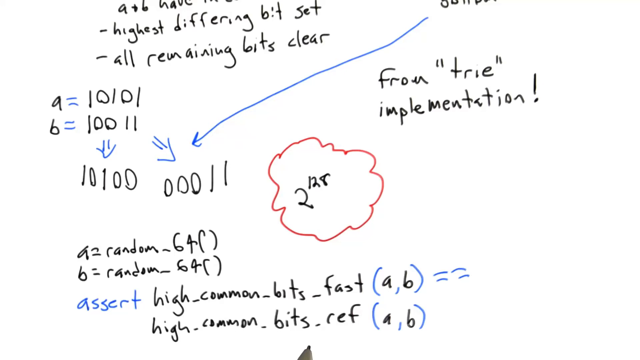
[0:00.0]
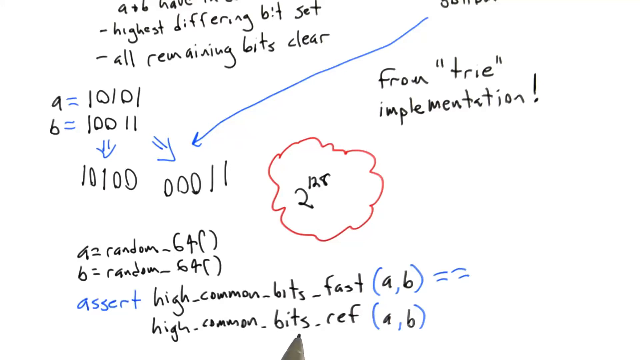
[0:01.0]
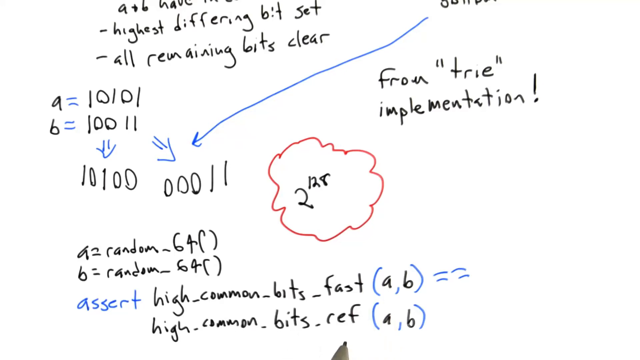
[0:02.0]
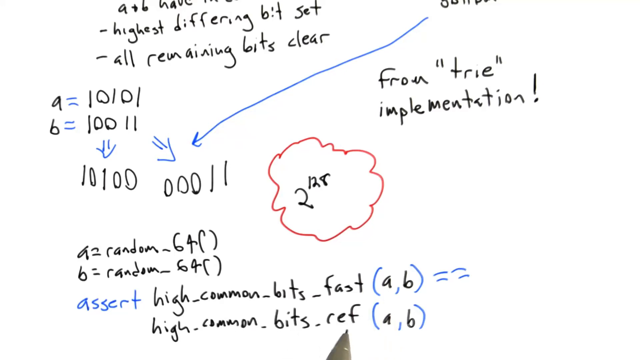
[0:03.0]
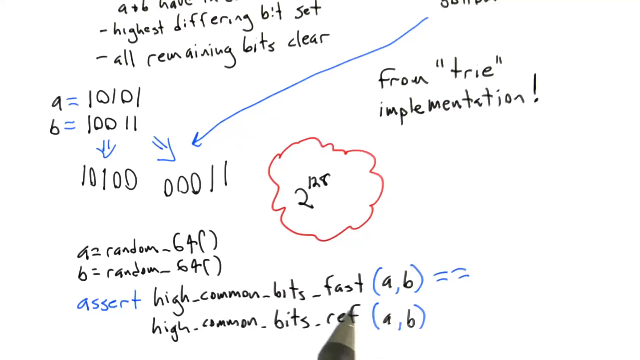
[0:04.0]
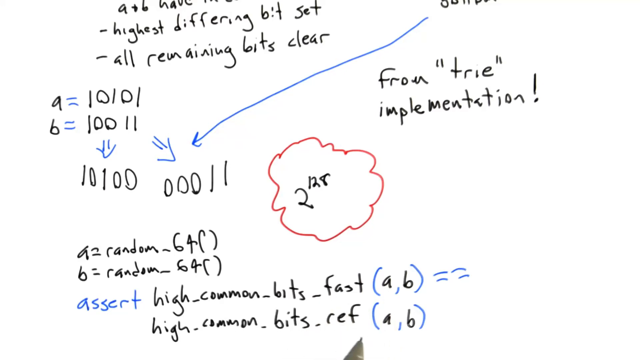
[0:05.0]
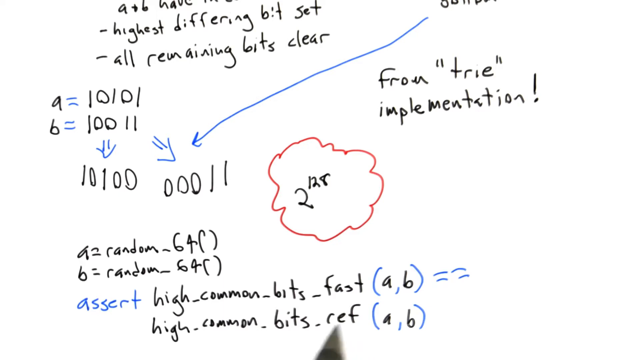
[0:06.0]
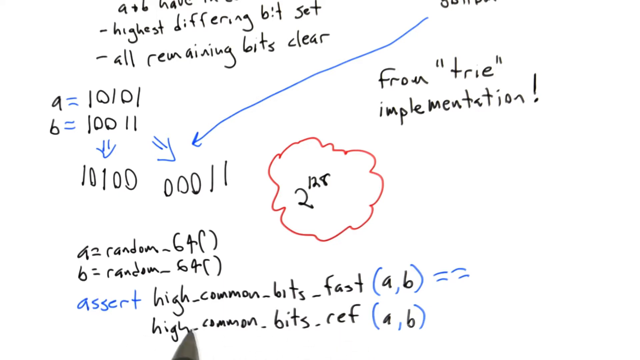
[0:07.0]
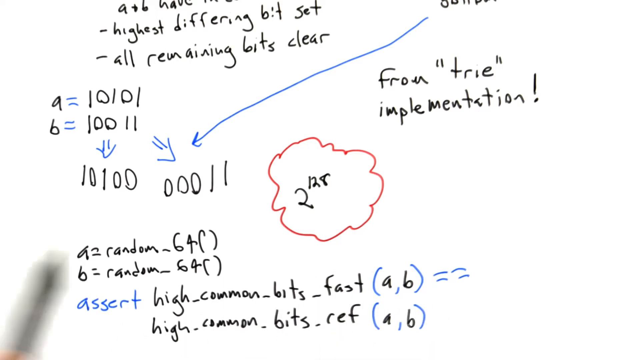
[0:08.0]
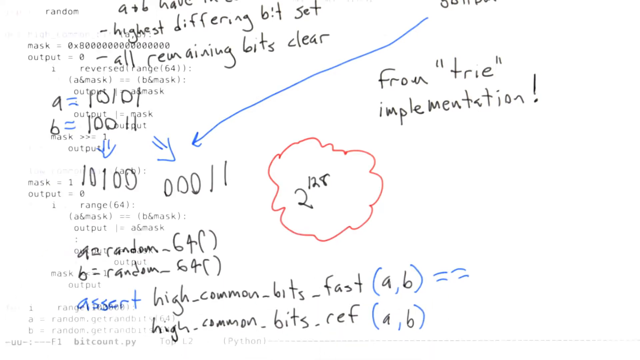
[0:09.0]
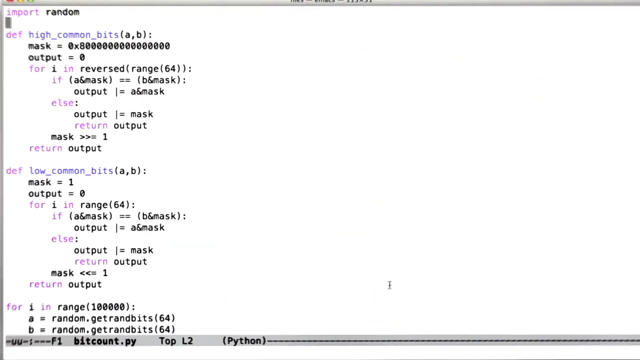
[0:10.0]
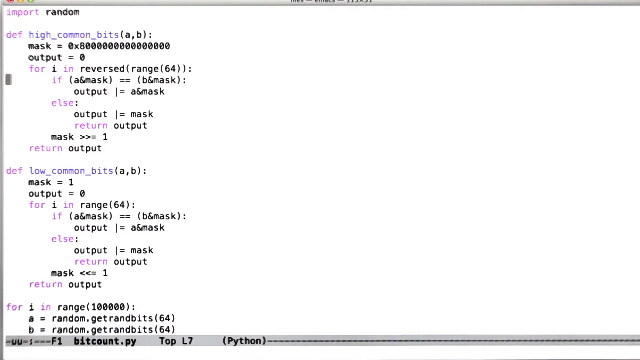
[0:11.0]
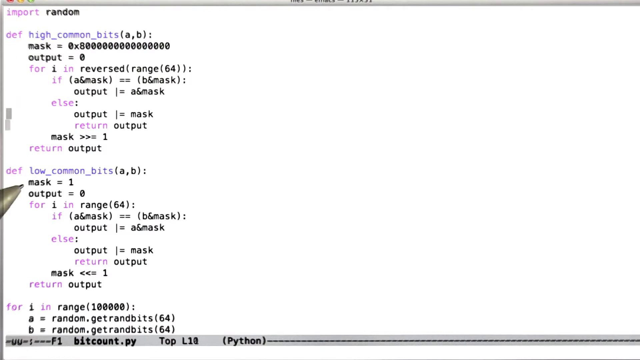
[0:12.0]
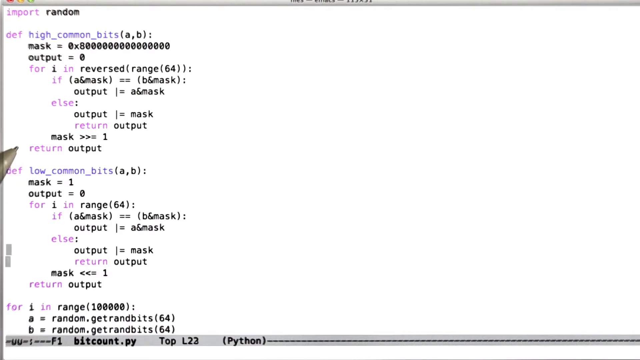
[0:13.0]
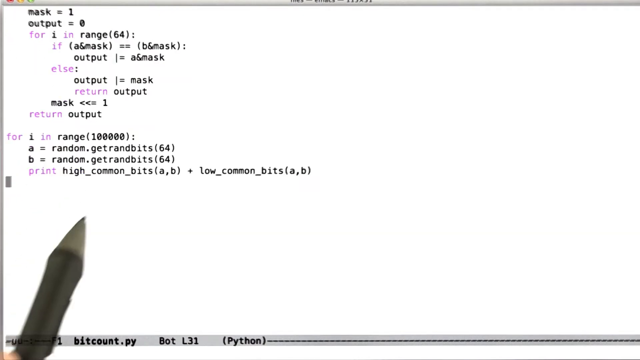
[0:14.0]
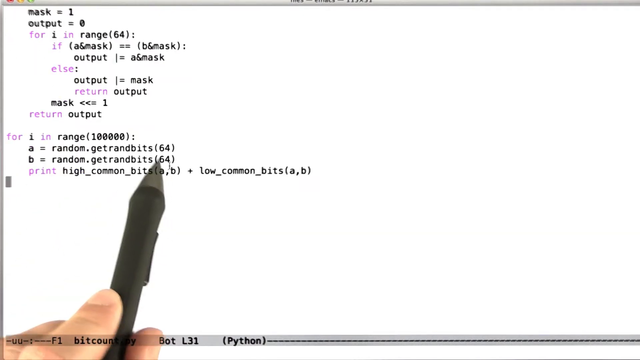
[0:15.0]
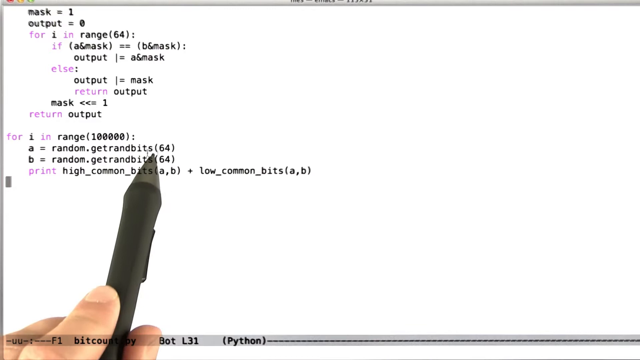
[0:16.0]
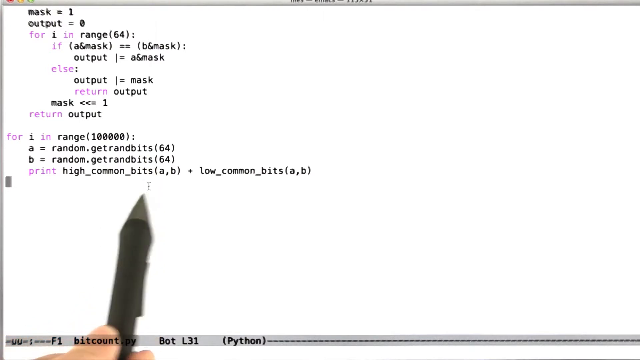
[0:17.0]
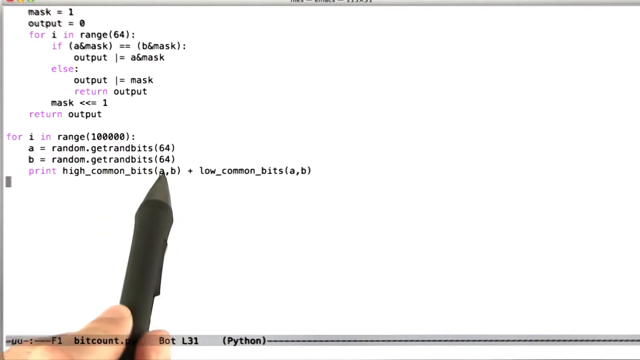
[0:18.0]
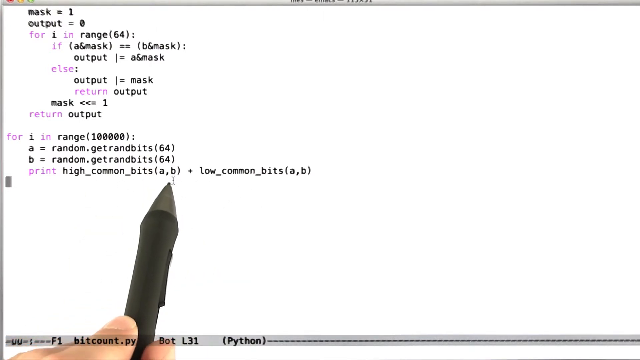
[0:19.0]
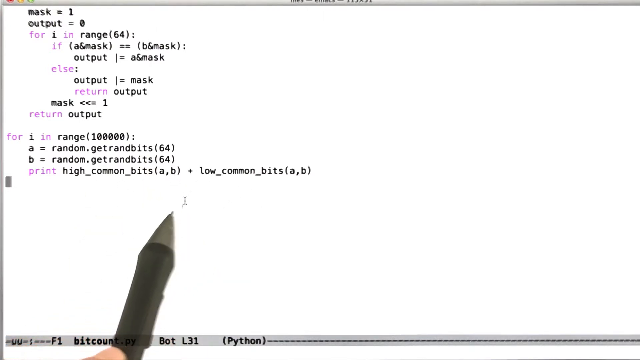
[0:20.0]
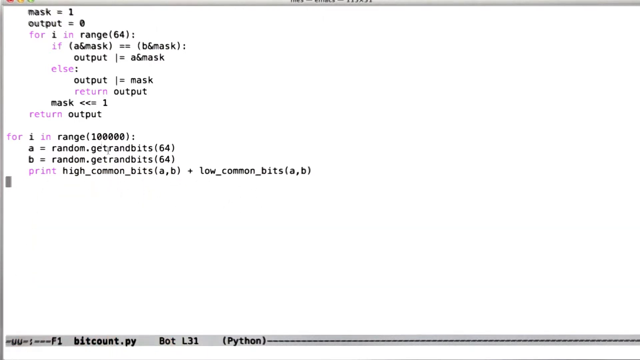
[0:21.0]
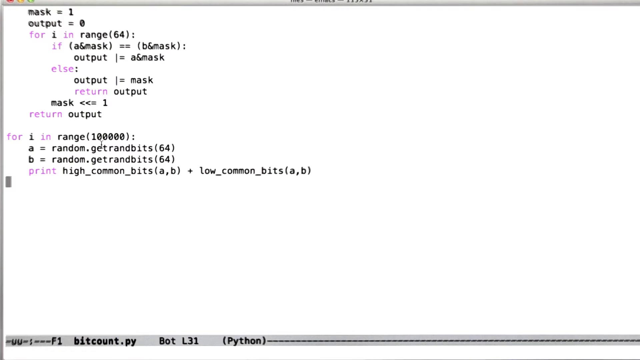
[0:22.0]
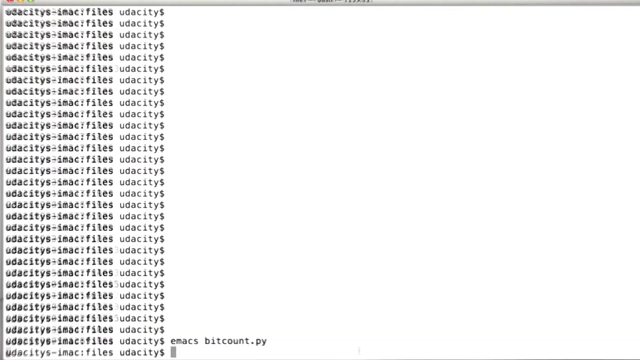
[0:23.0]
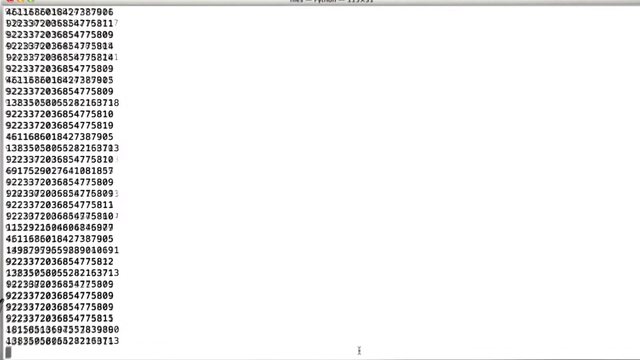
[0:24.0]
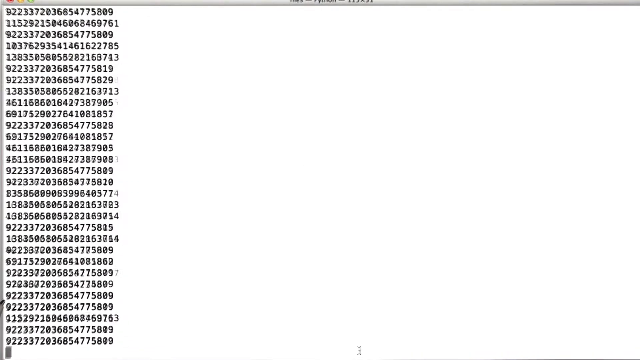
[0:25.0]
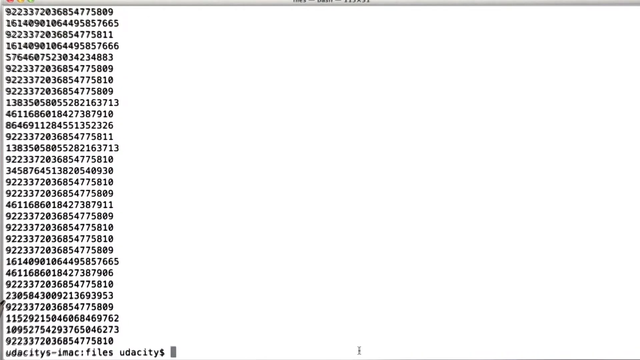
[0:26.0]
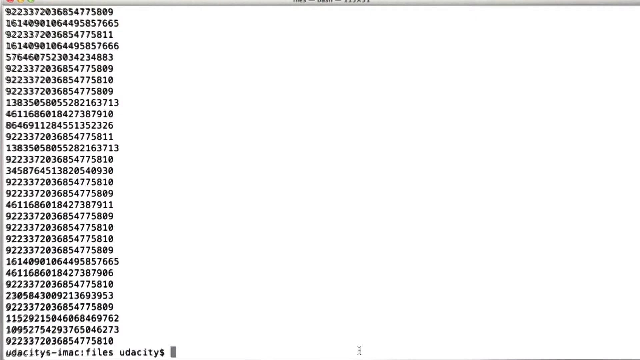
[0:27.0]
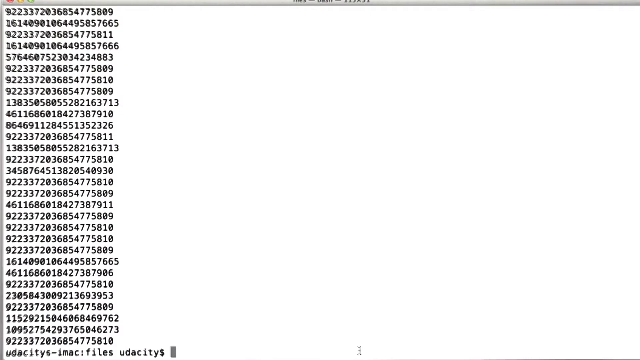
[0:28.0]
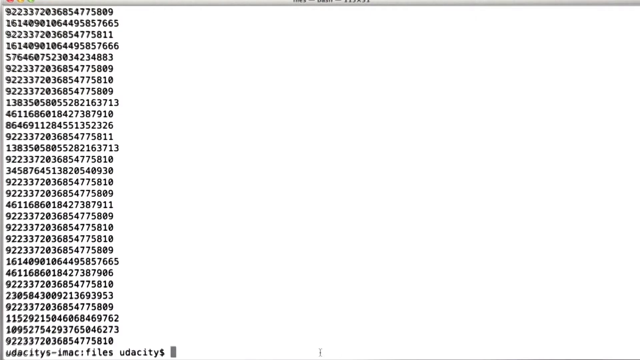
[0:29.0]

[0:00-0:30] A whiteboard has a handwritten math formula written on it. Most of the writing is in black ink, with arrows in blue ink and parentheses around symbols in blue ink. The writing appears to mention a highest differing bit set and all remaining bits clear. The binary number 010101 is shown, along with formulas such as A = random-64 and other mathematical parentheses and symbols. There is a cloud-like shape in red ink. The answer to the formula is possibly 2 to the 128th power. A pen crosses the bottom of the screen, going in circles, and the view turns into computer code being written in the standard way, with symbols and such being listed. An enormous amount of code then runs at fast speed, with all varieties of numbers, before the video comes back to the opening whiteboard, which shows "from 'trie' implementation!" with trie in quotation marks.